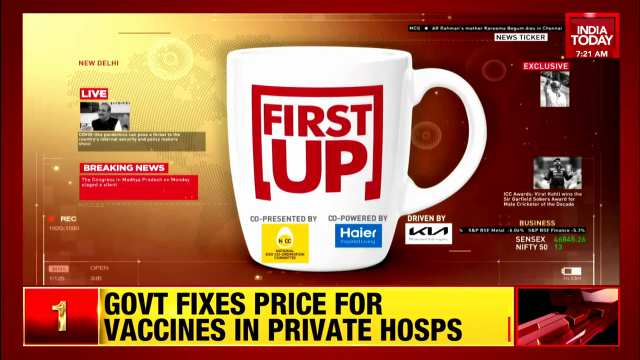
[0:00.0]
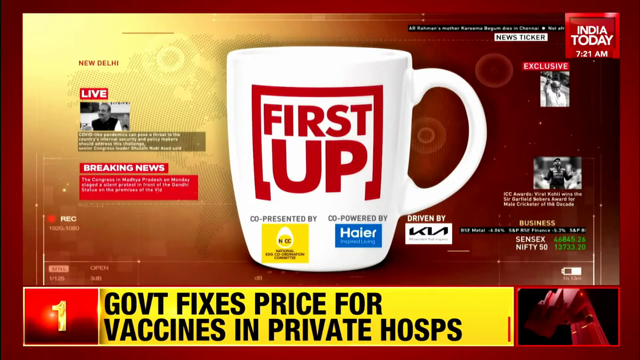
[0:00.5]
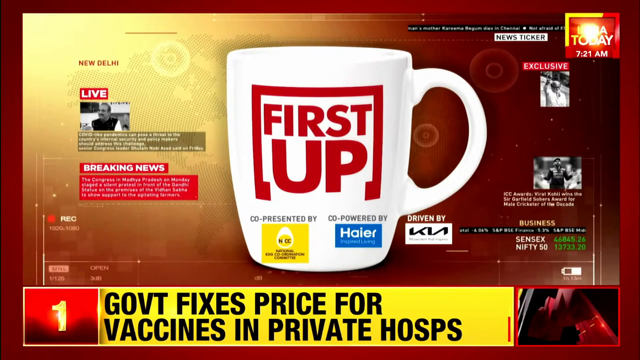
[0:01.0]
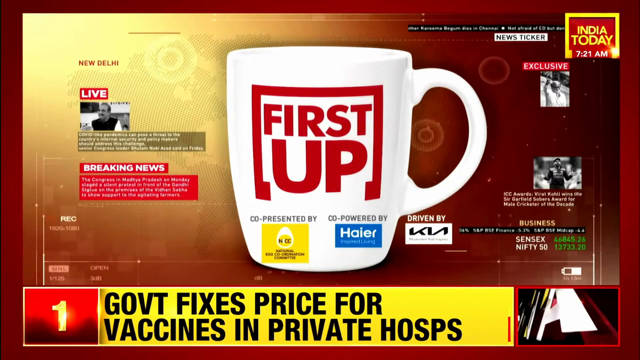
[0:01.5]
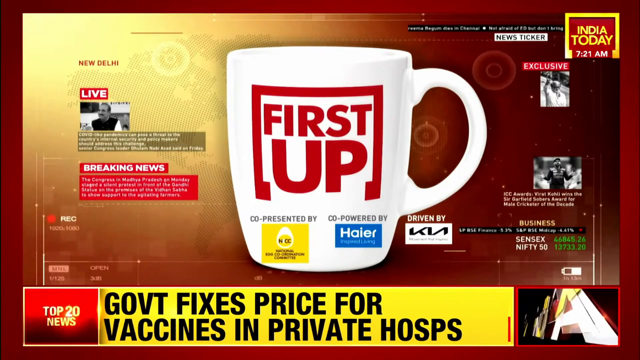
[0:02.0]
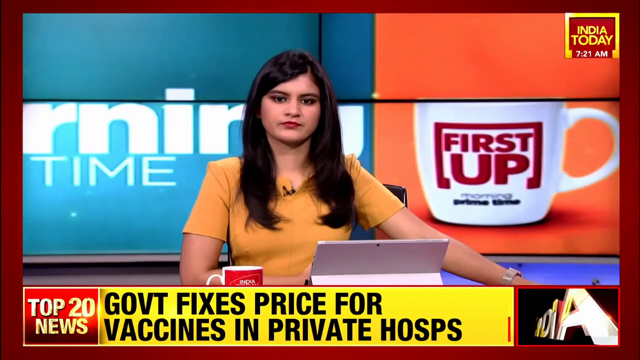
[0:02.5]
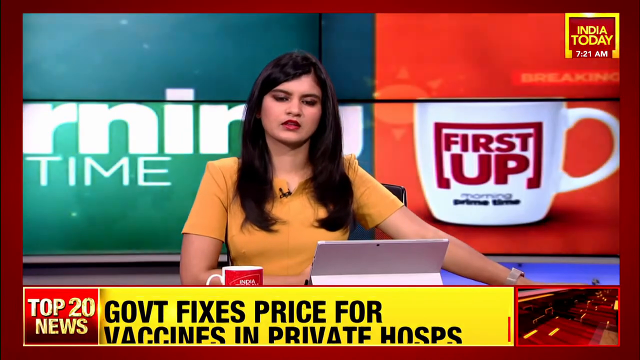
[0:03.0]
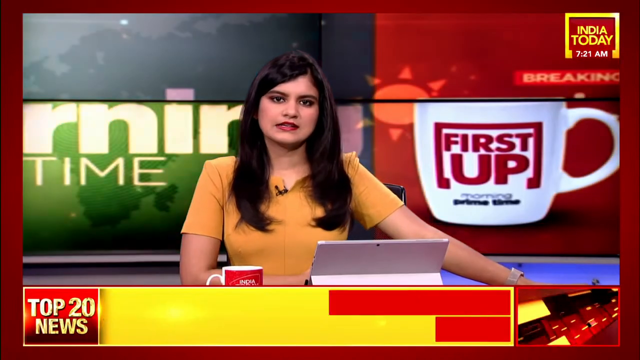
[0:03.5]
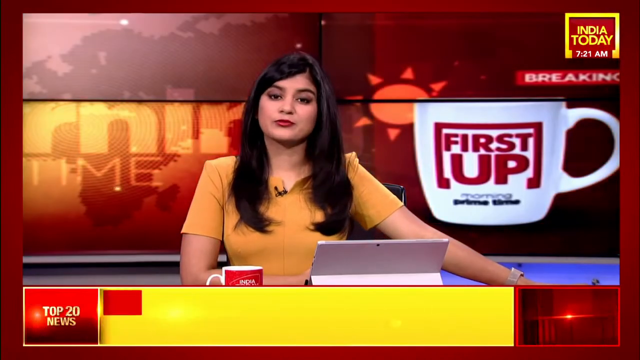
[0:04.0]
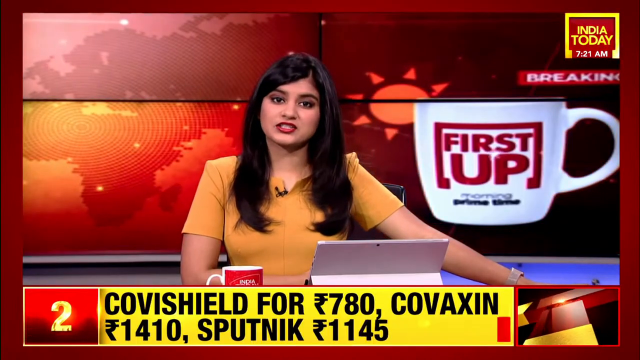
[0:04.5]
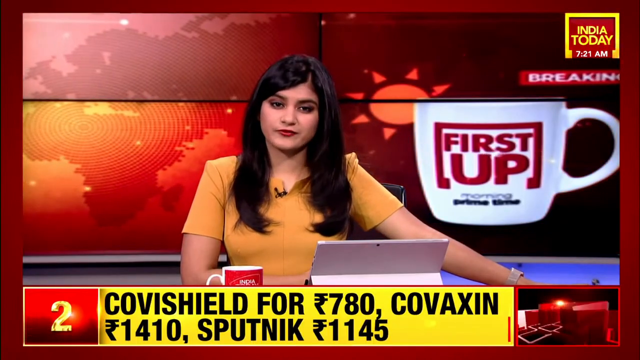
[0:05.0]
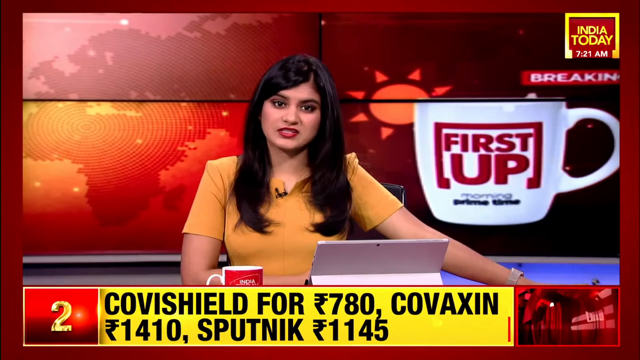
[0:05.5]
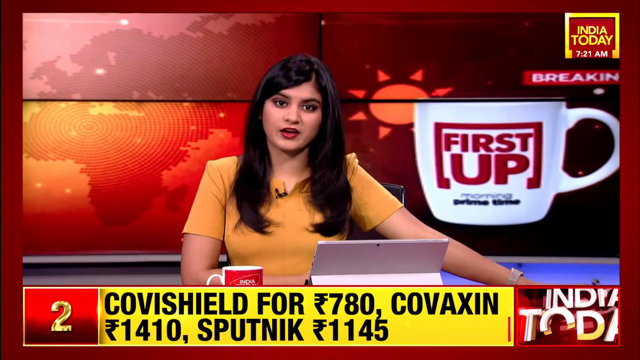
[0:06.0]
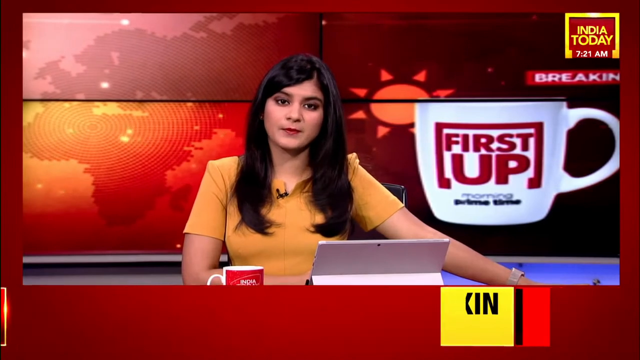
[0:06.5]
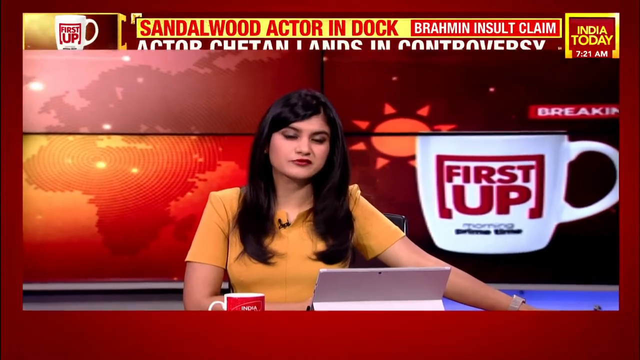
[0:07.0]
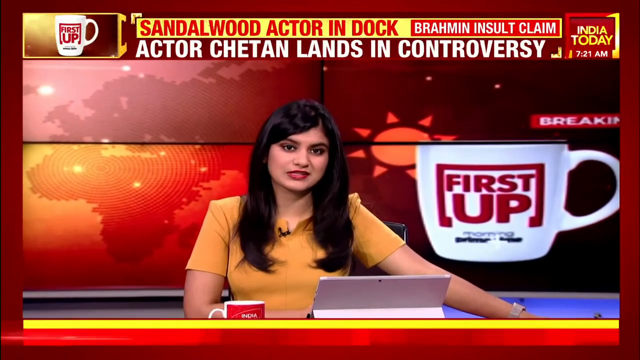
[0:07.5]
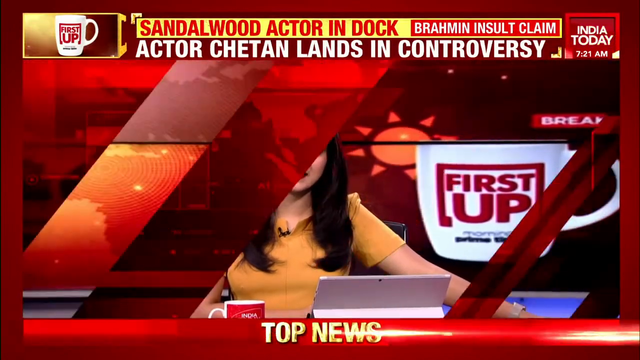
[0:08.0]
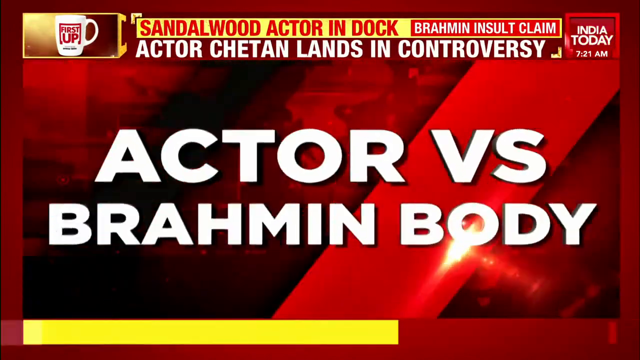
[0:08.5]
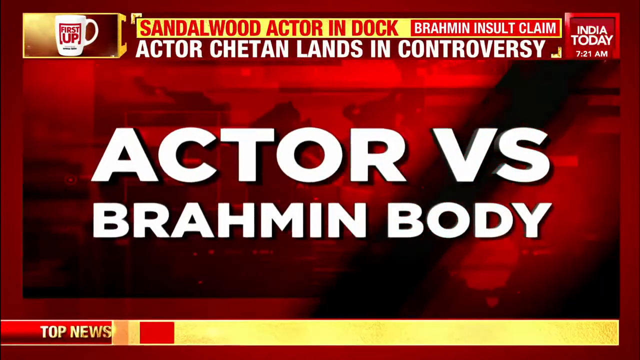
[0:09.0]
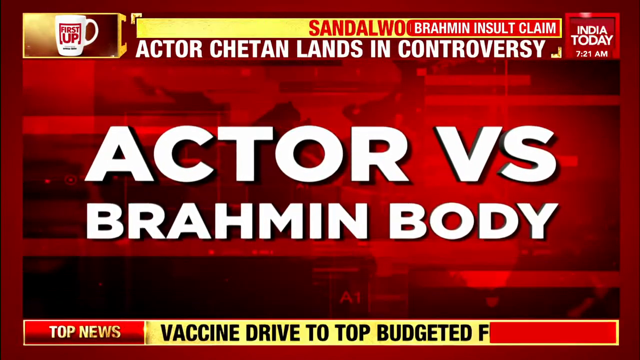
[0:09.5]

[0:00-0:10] The segment, apparently from a news channel in India, concerns the government fixing prices for vaccines. Text on screen reads "India today 7:21 a.m." An Indian woman with long dark black hair wears an orange short-sleeved shirt. Text at the bottom of the screen reads "Covishield for 780, Covaxin 1410." Along the top, text scrolls across reading "Sandalwood actor in dock" and "Actor Chetan lands in controversy," and then "actor versus Brahman body." A cup graphic reads "first up." In the corner is a live picture of a man, with no explanation of who he is. "Breaking news" appears along with the live image of the man, but the writing there is too small to read. On the cup, "co-powered by" Haier is on the bottom right, and "co-presented by" is on the bottom left with a yellow box, apparently naming N-I-C-C. On the right side of the screen, under a "business" label, figures that seem to track stocks show Sensex at 46,845.26 and Nifty 50 at 13,733.20.